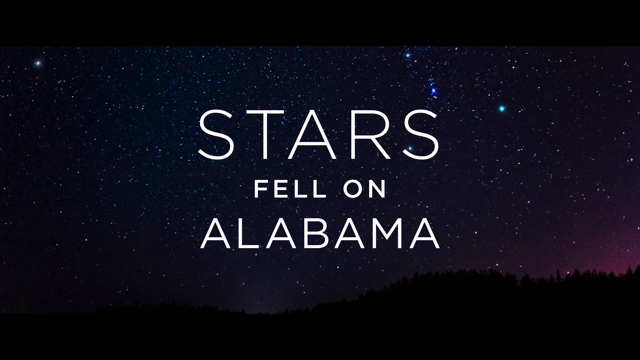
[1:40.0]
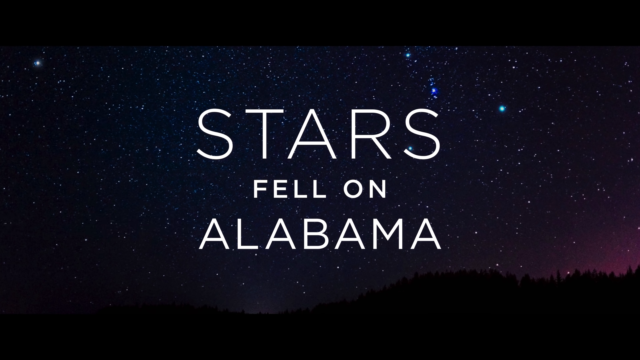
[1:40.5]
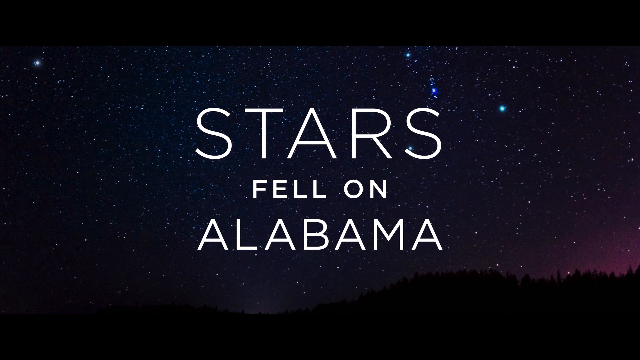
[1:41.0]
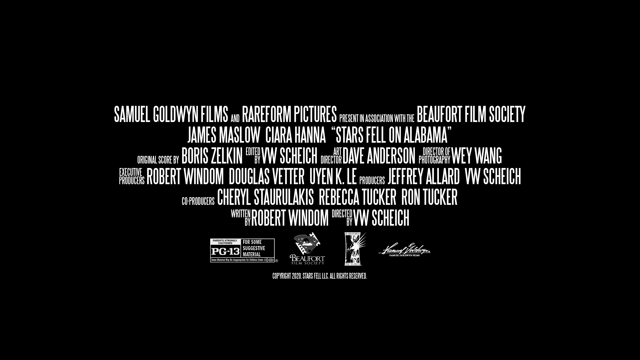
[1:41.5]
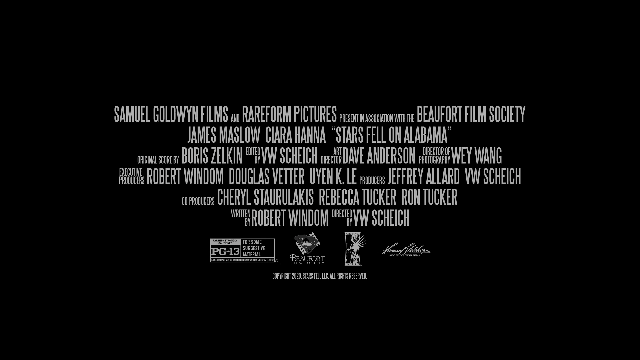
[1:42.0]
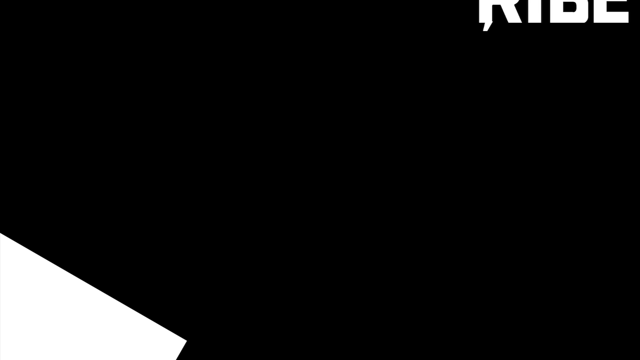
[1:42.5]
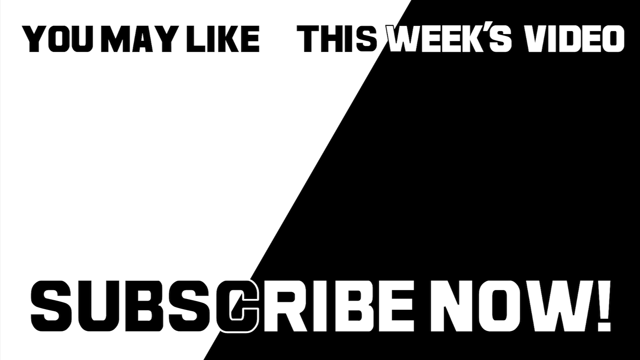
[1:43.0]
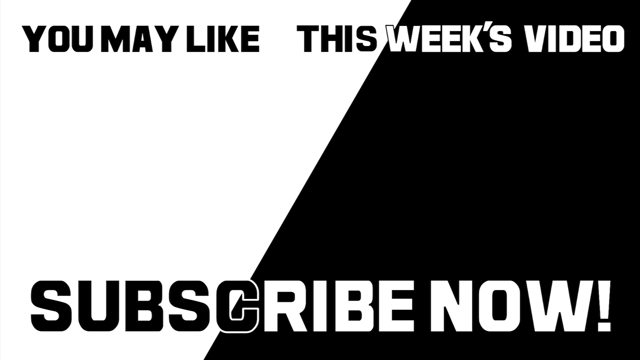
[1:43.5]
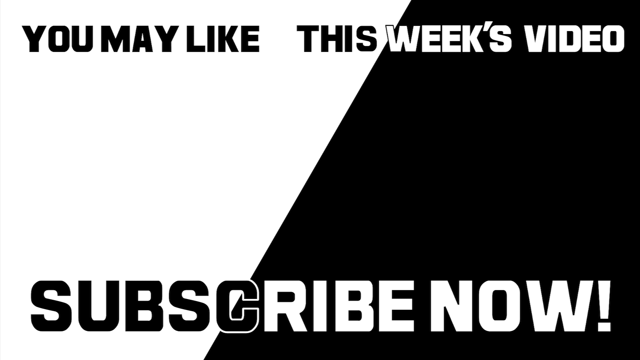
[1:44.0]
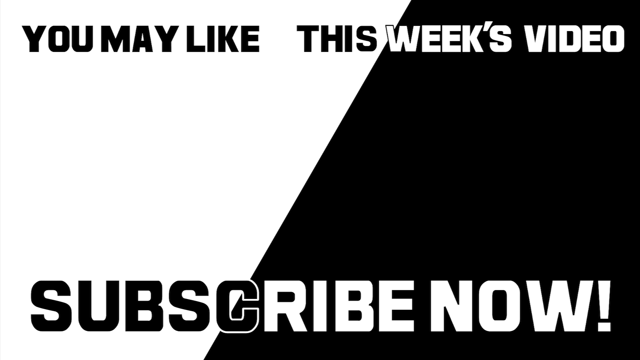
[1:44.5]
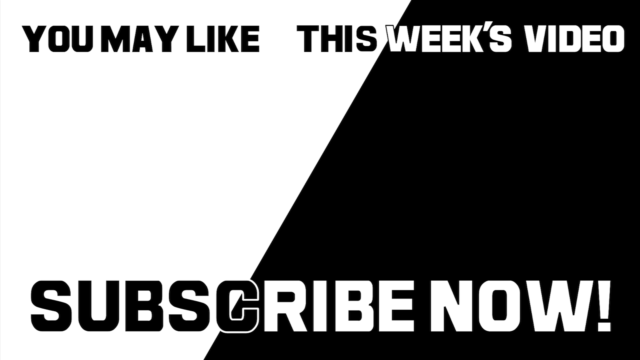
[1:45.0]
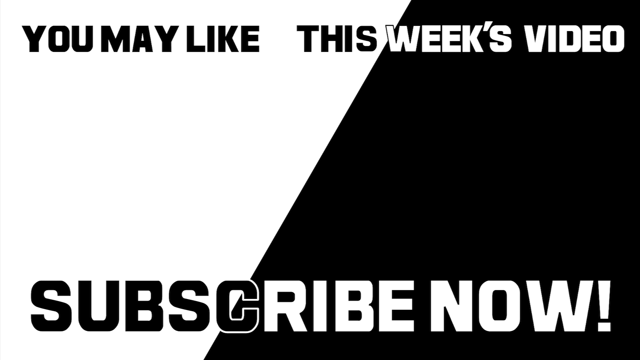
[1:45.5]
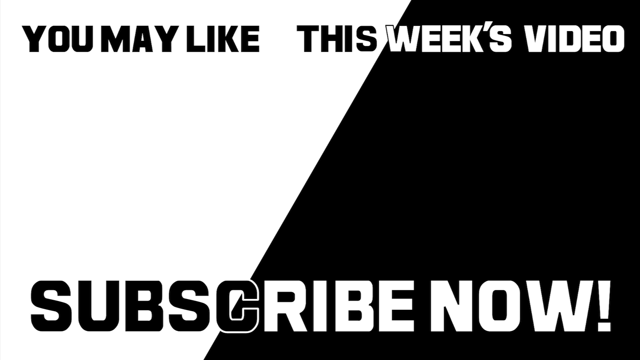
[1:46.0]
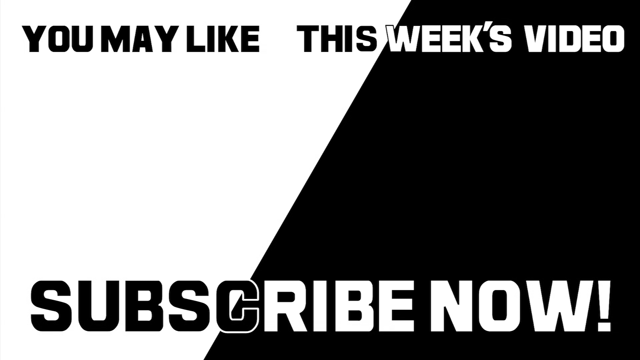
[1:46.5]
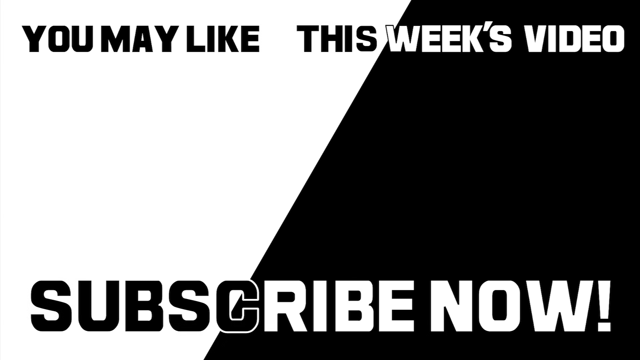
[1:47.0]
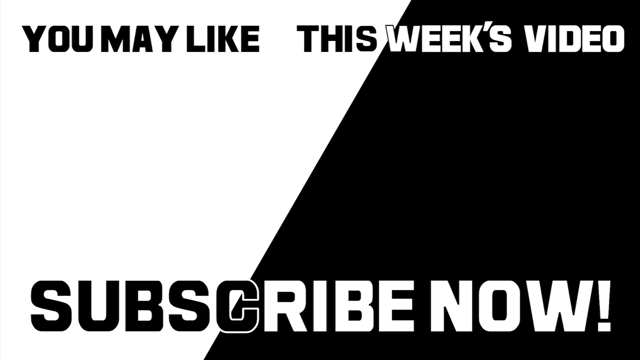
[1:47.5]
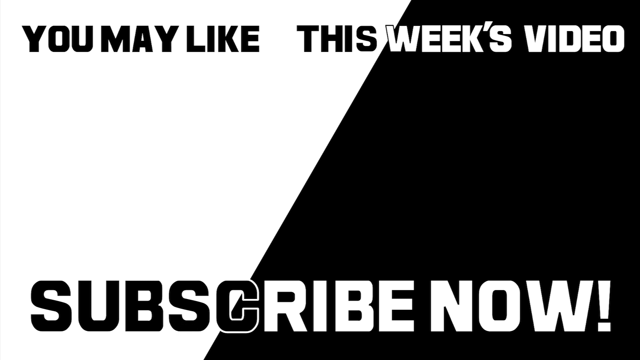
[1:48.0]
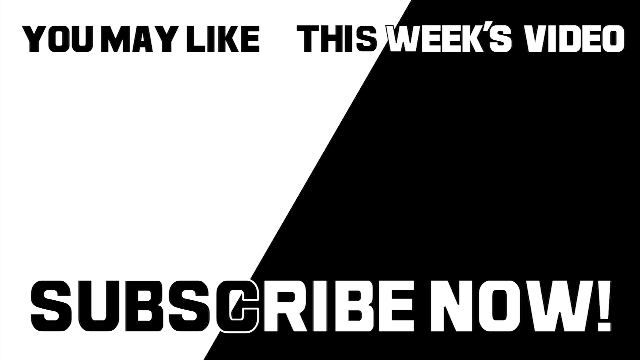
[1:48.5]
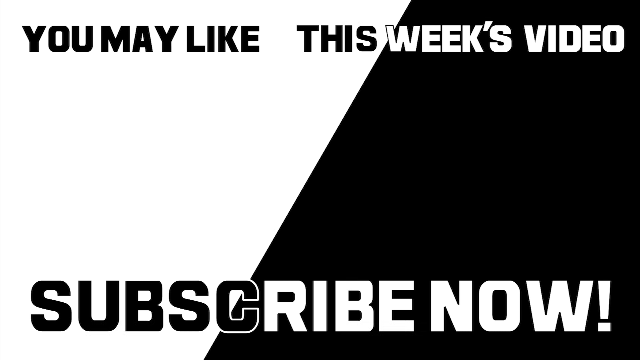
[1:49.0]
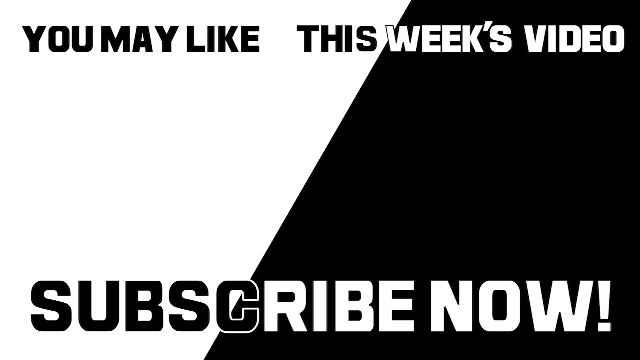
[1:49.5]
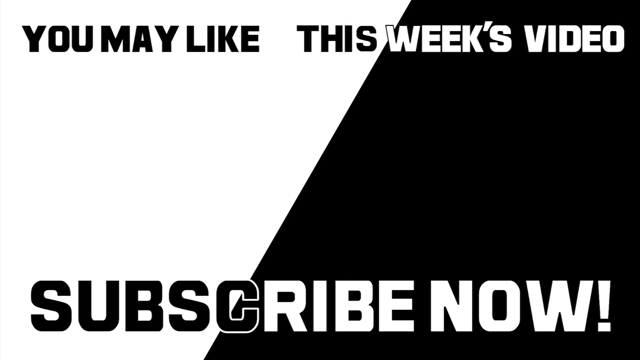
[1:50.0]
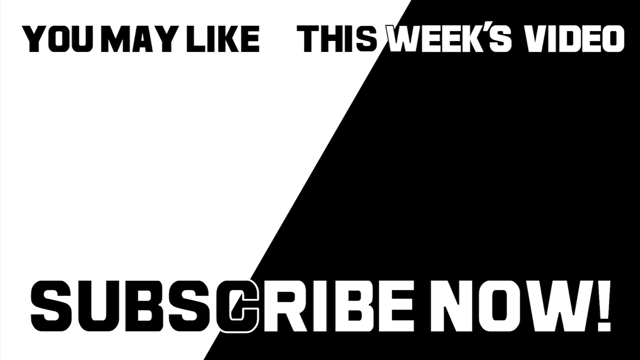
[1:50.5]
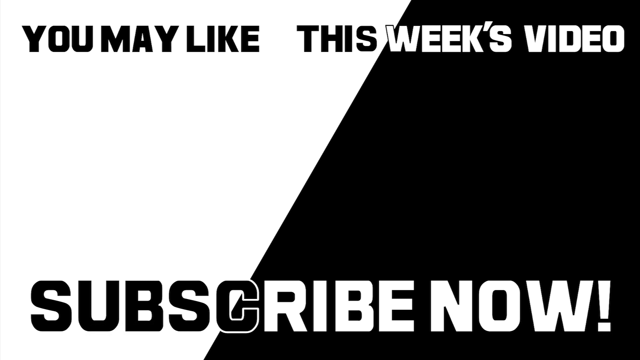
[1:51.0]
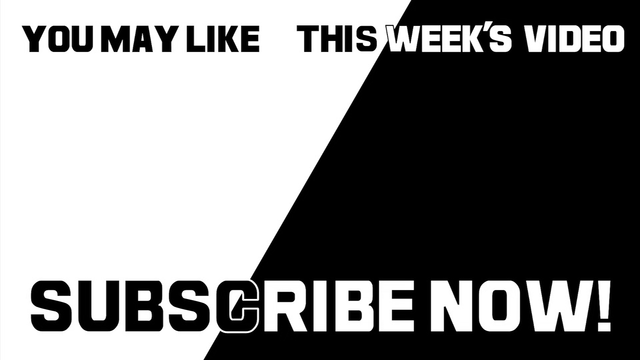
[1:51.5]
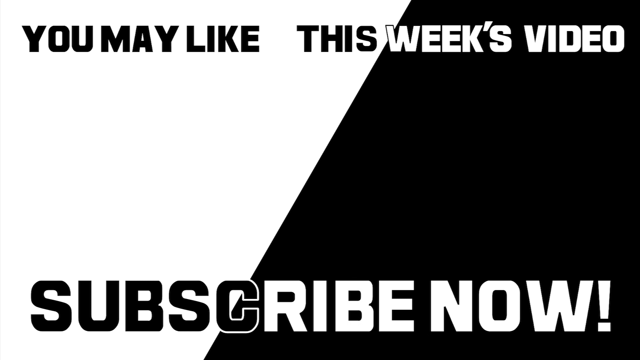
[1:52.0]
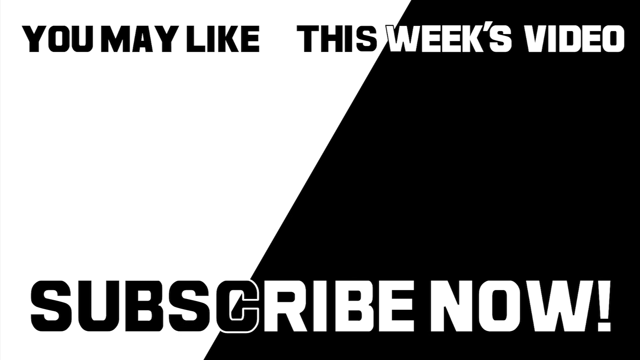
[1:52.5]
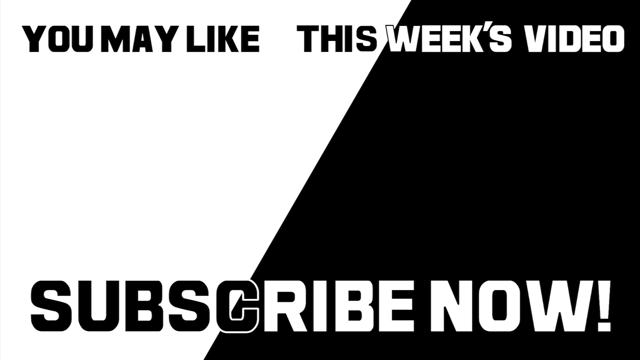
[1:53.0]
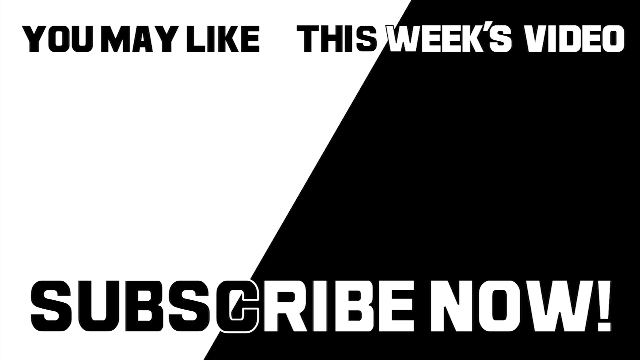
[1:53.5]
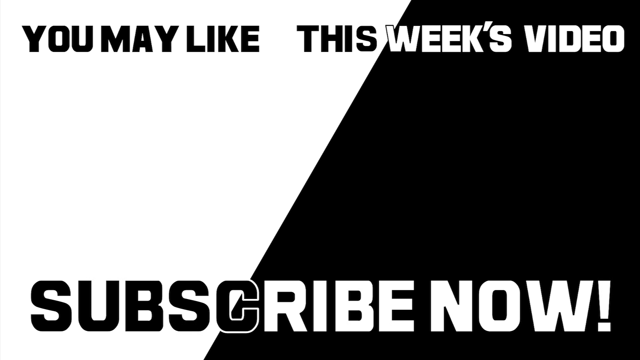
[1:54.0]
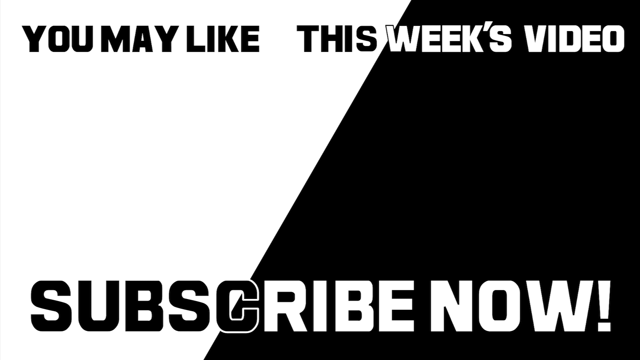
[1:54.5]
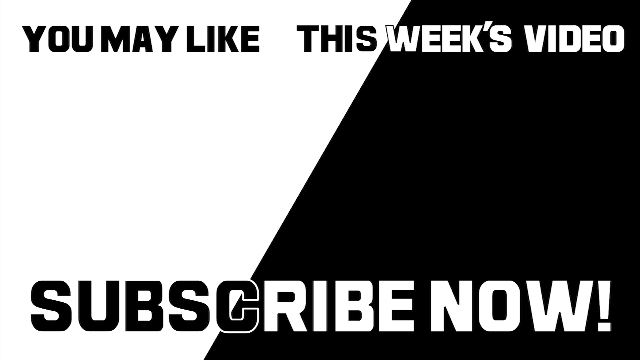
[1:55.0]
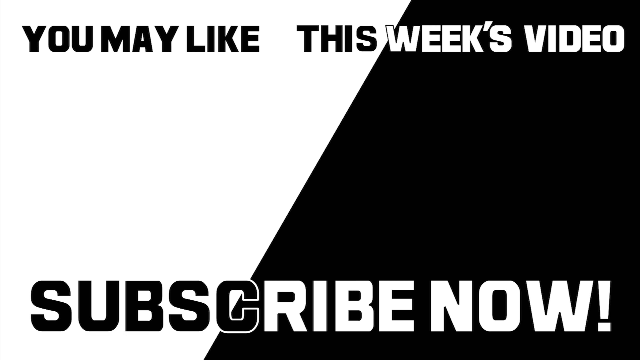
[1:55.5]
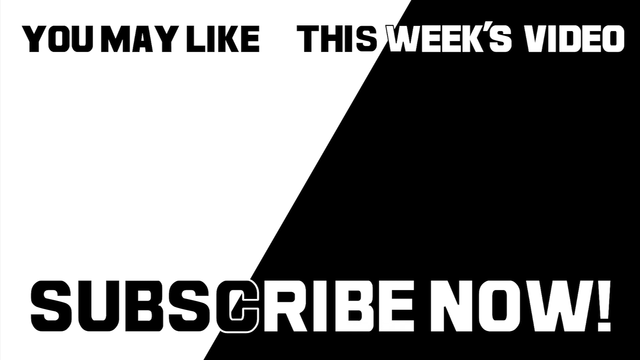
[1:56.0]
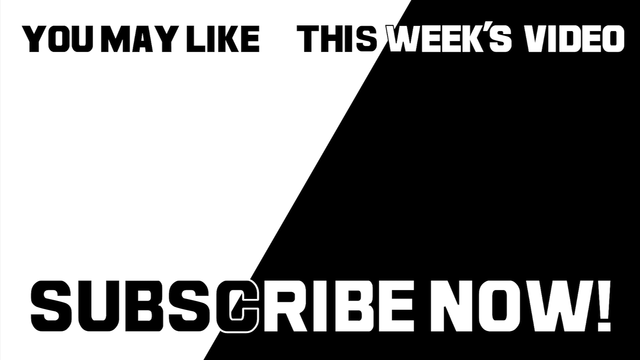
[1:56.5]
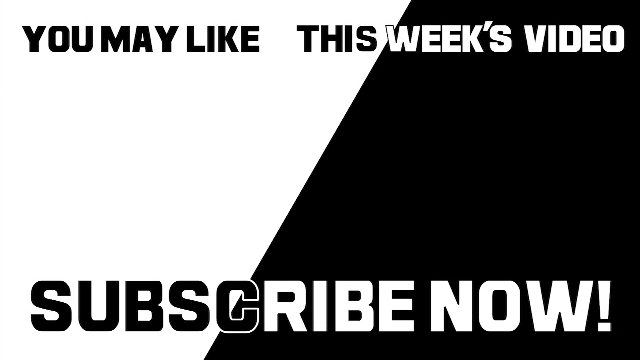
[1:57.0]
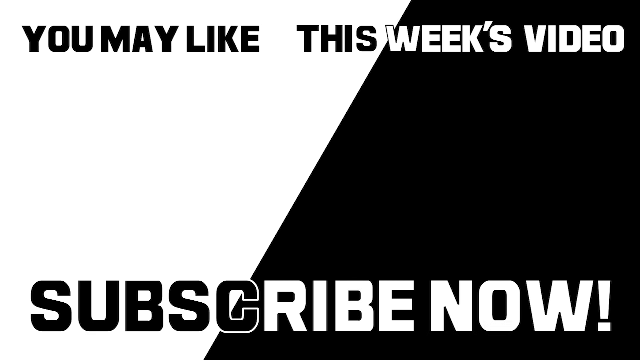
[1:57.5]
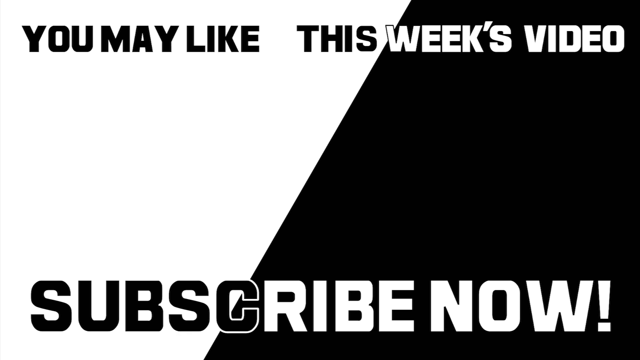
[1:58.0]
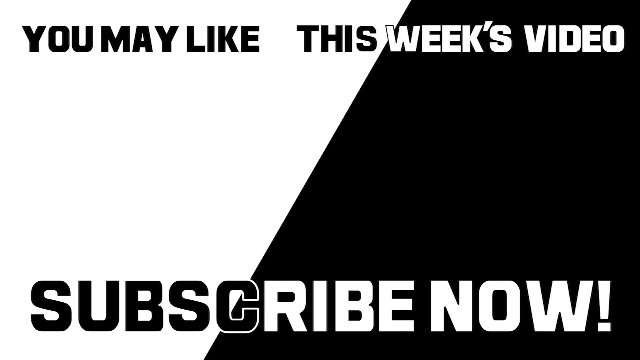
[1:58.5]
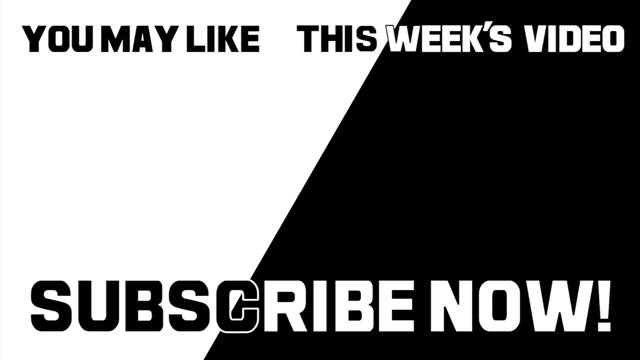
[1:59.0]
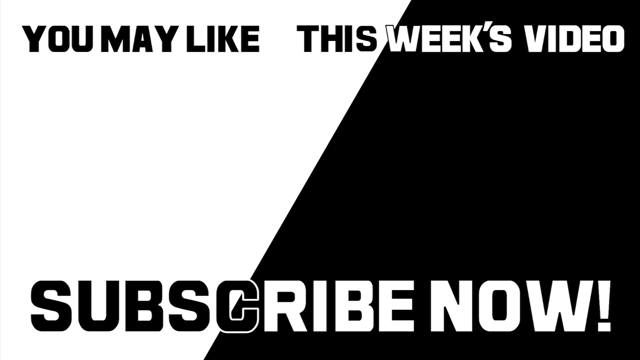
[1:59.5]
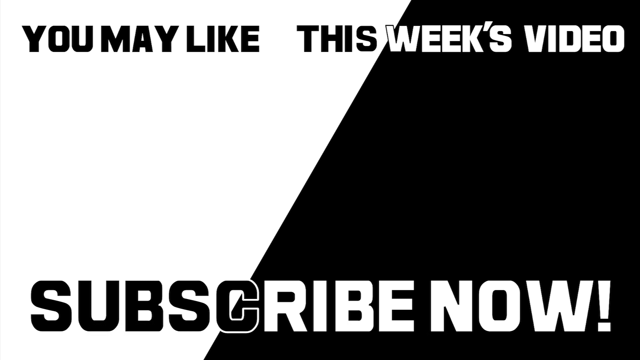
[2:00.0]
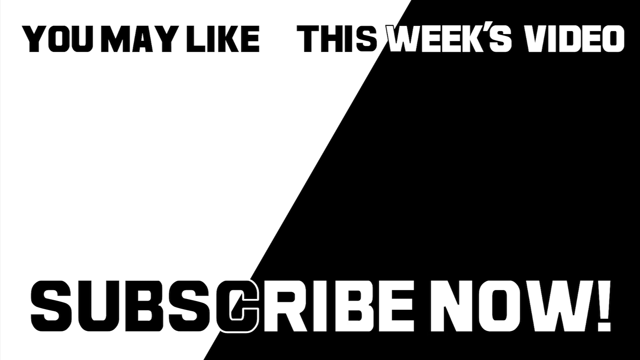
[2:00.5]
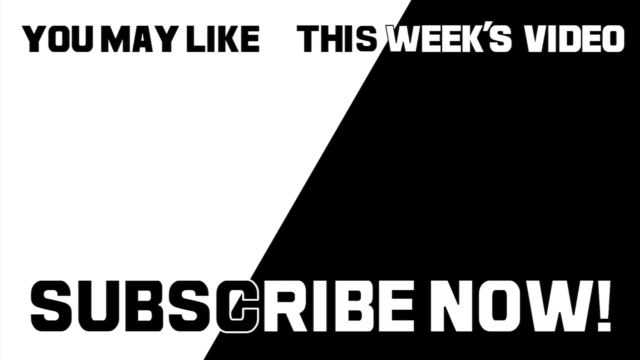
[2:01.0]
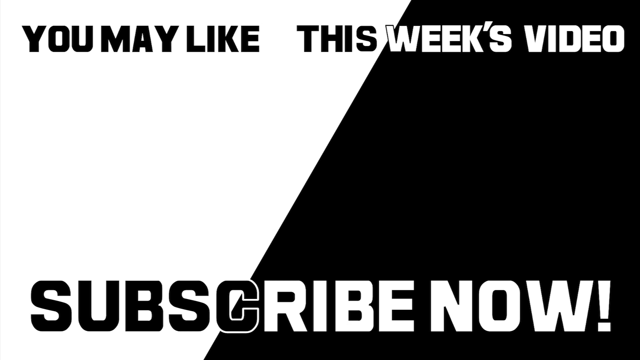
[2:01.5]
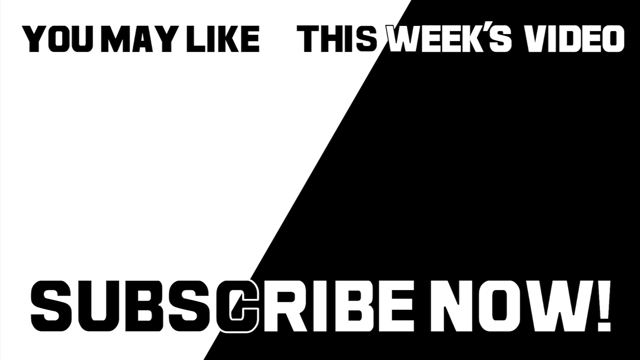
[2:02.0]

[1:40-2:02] Credits appear, including Samuel Goldwyn, James Maslow and Robert Windholm, along with a statement that the movie is not for people under the age of 18. Text in black and white then reads "you may like this week's video" and asks viewers to subscribe. The trailer is for the movie Stars Fell on Alabama.